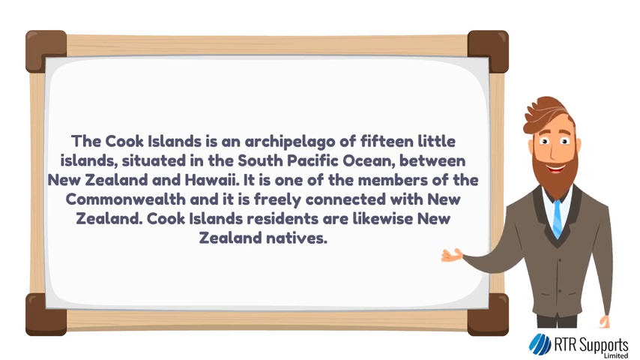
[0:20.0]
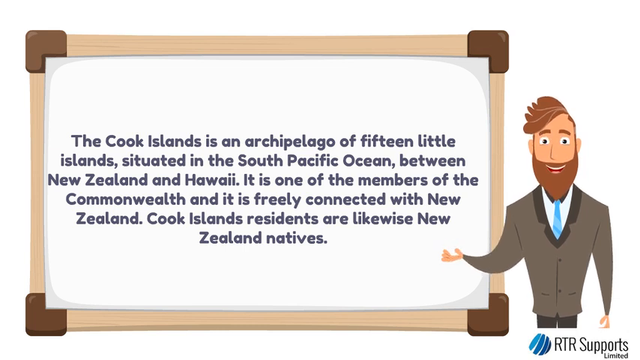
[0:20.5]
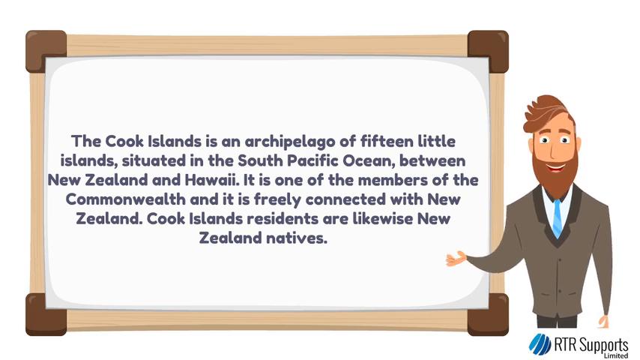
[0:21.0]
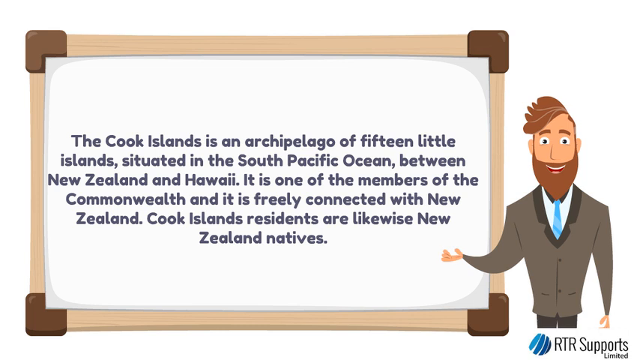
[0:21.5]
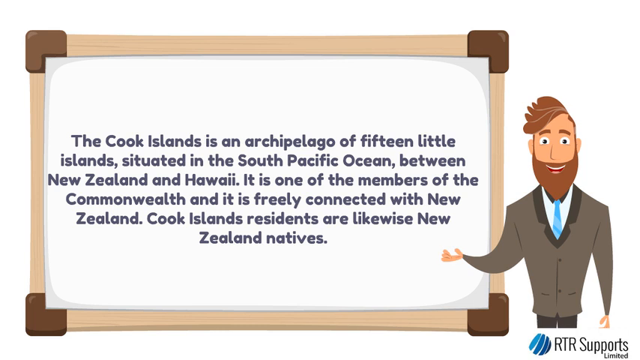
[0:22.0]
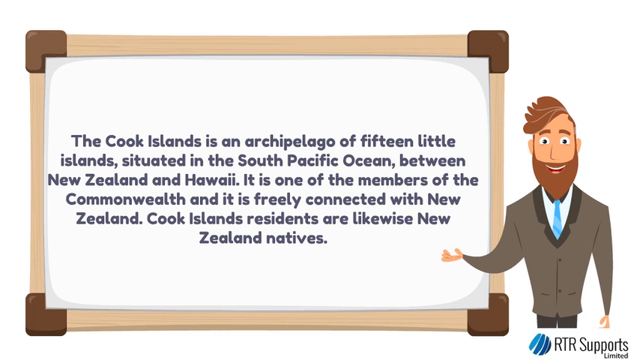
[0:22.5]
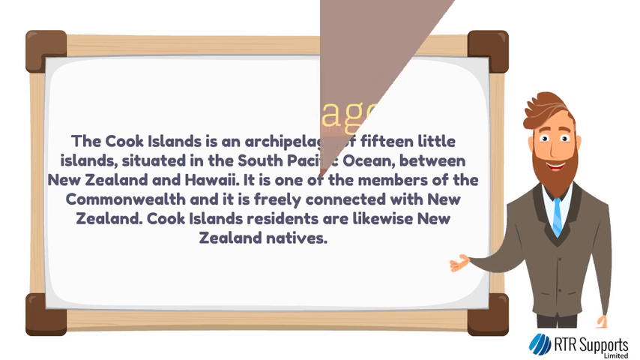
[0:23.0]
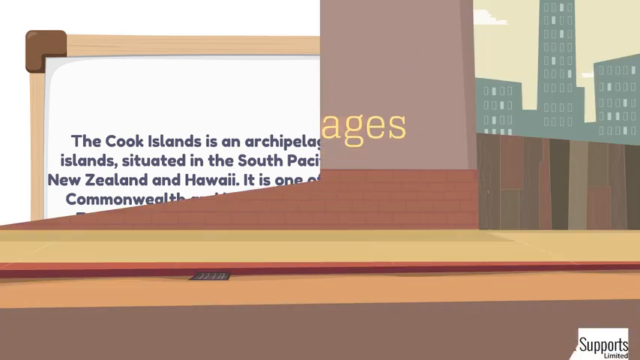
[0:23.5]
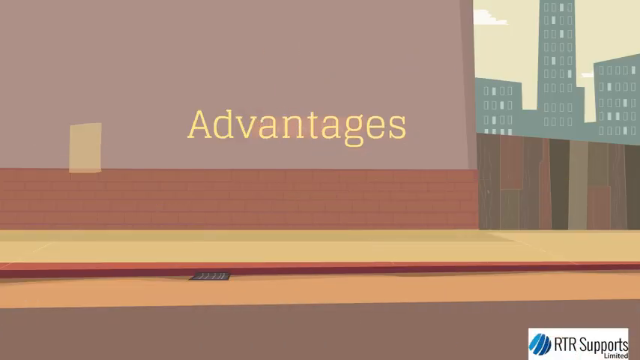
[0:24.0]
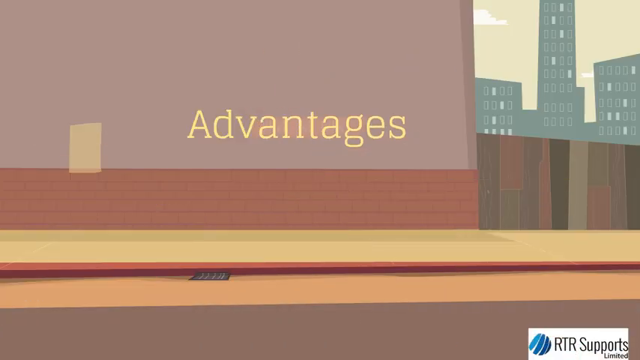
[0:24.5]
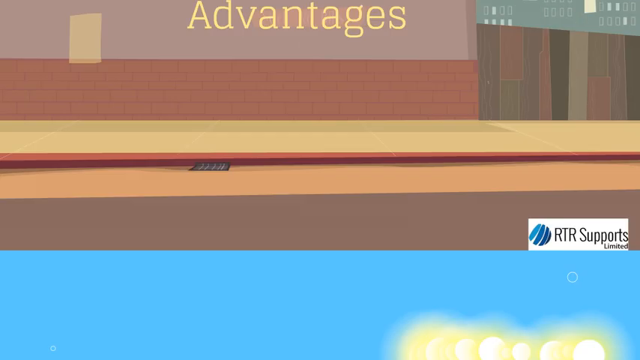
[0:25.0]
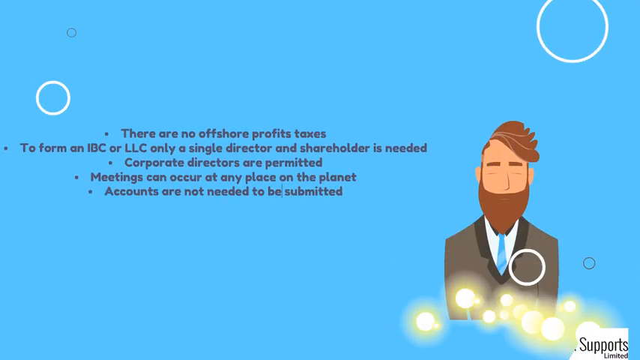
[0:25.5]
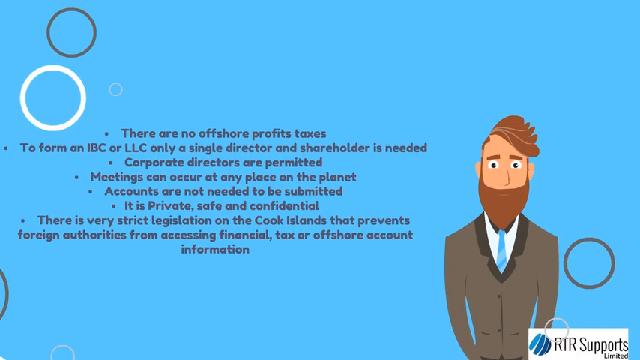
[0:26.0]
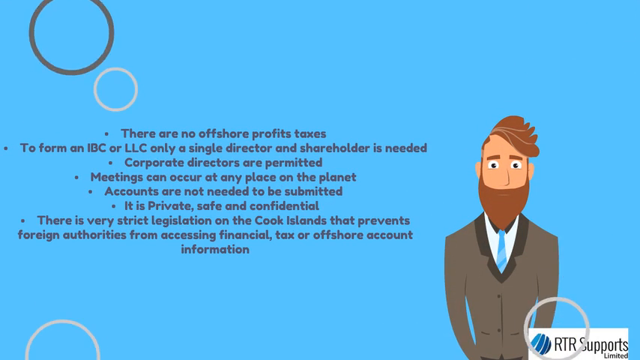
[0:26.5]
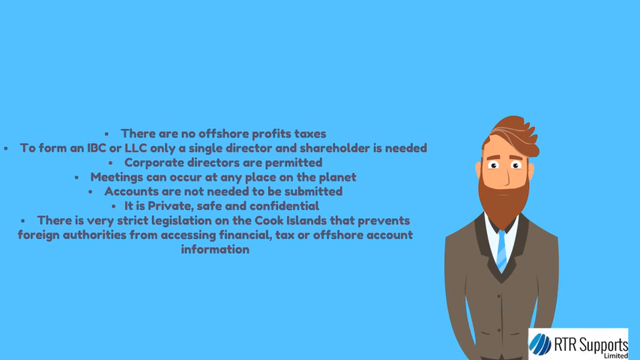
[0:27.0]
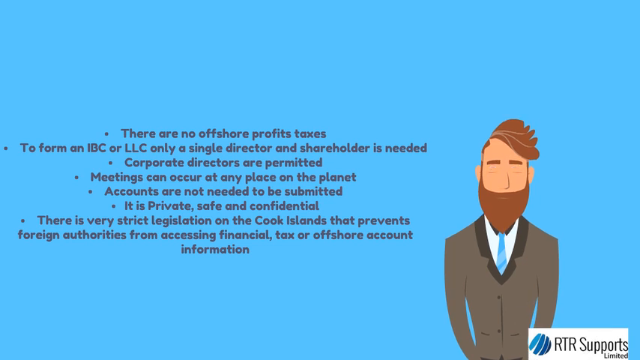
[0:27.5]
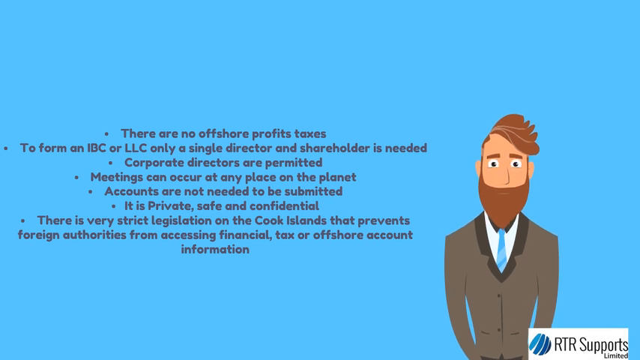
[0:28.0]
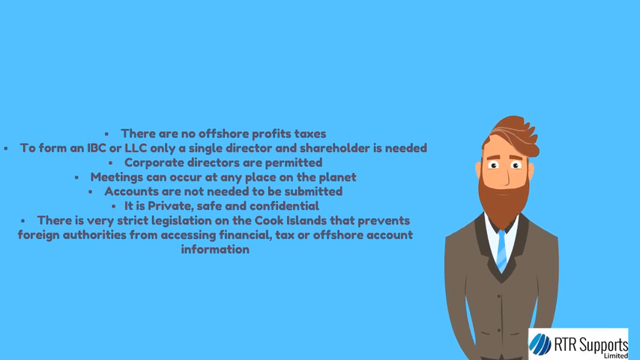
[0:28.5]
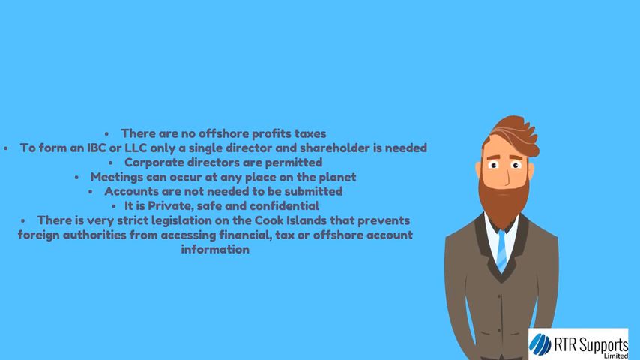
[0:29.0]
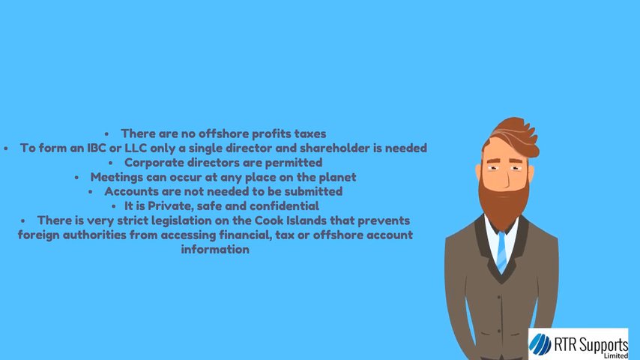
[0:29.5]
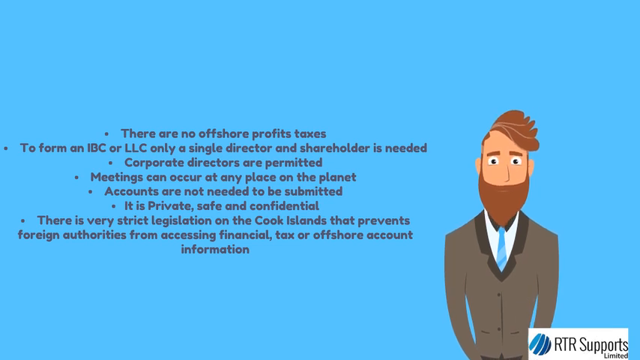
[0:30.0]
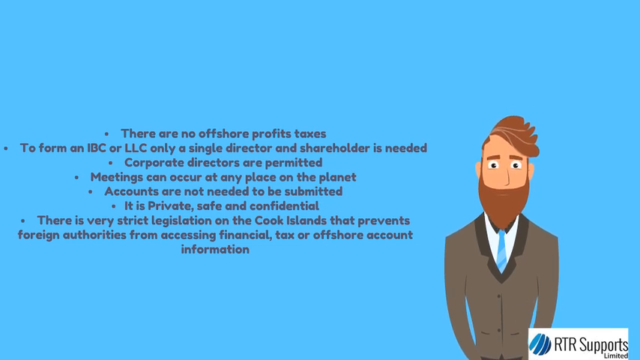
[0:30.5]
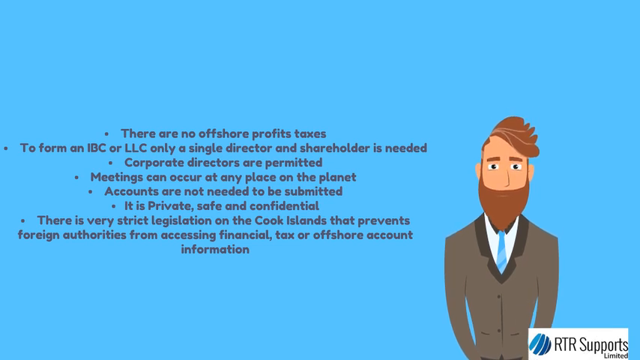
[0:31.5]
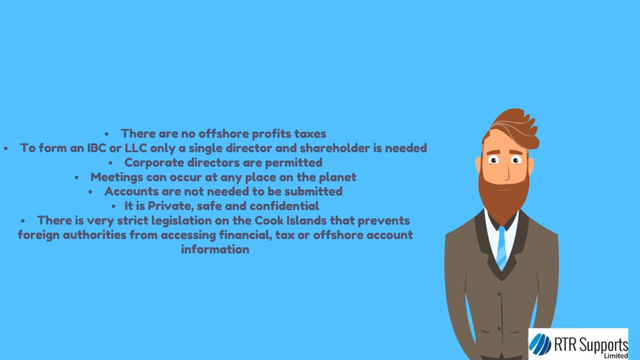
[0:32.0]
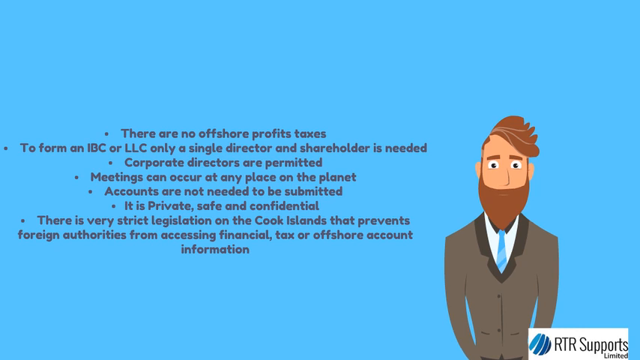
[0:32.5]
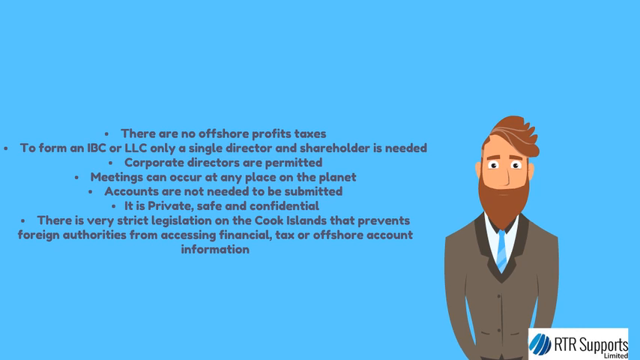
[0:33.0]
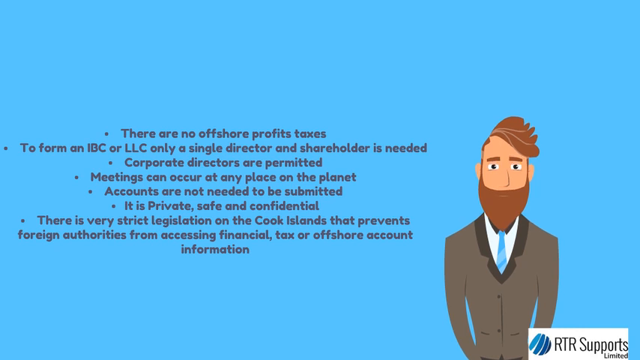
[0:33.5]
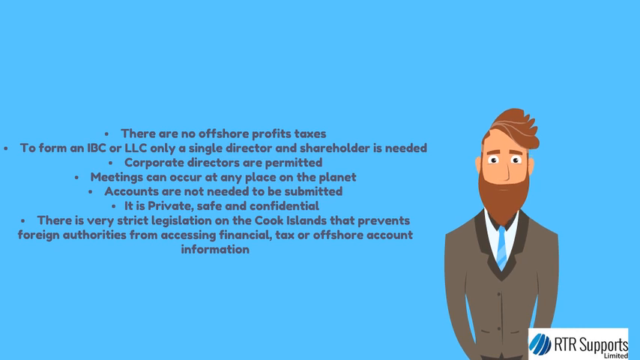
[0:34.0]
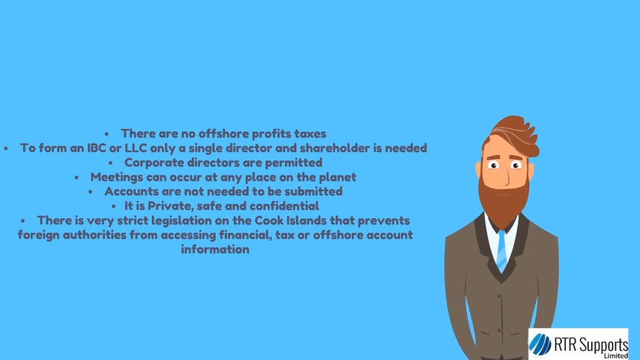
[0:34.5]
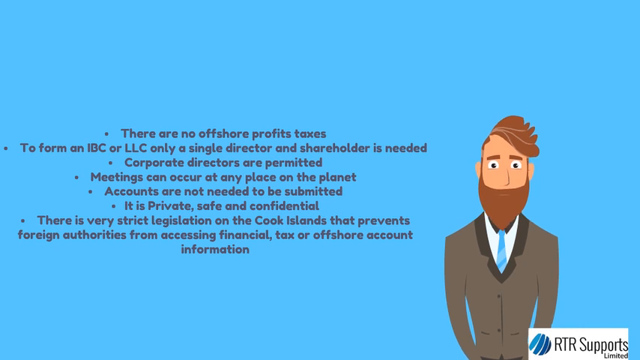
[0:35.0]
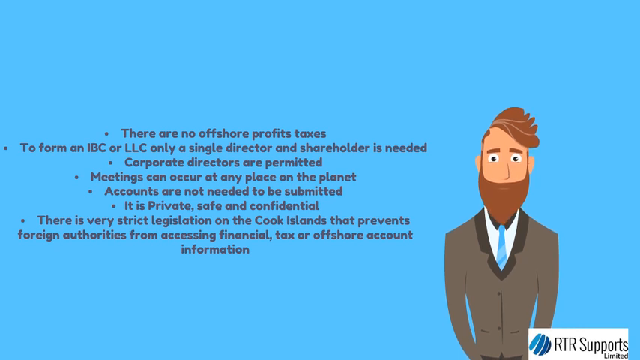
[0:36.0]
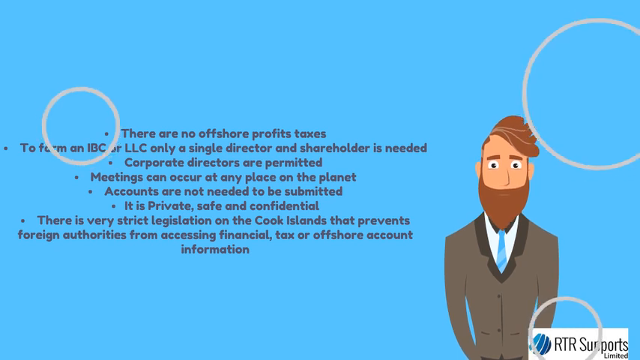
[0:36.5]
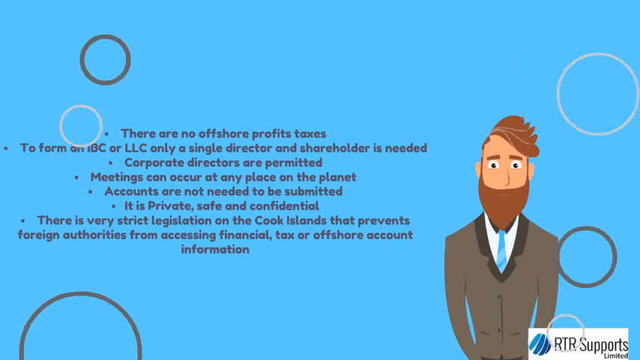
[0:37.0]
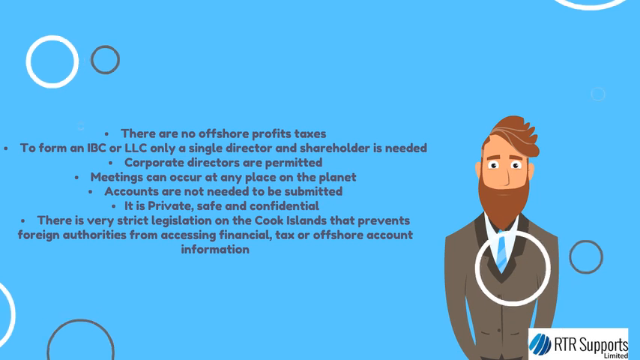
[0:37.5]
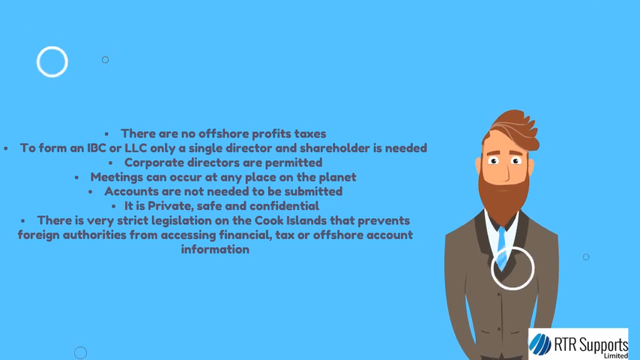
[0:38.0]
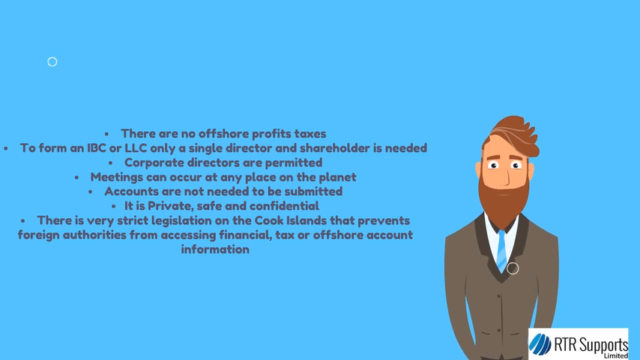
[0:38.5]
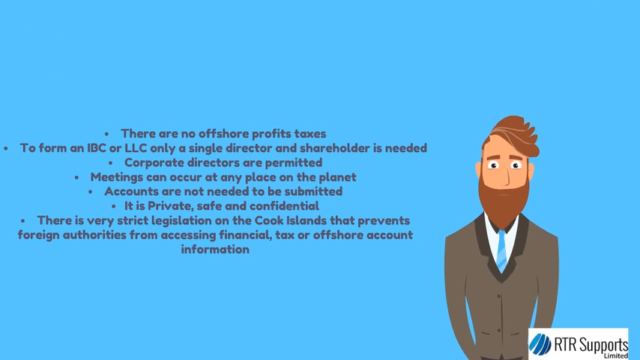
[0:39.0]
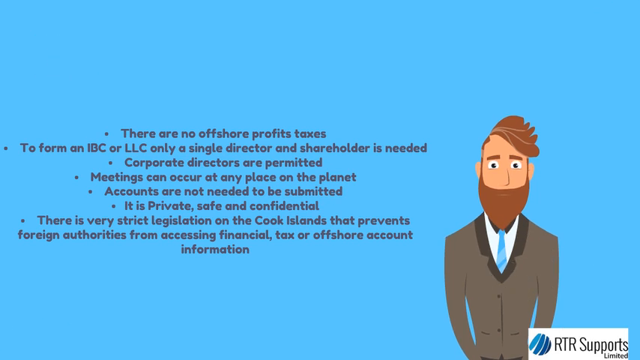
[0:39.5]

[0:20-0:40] The presentation explains what the Cook Islands are: an archipelago of 15 little islands in the South Pacific Ocean between New Zealand and Hawaii, a member of the Commonwealth, really connected with New Zealand, with residents who are likewise New Zealand natives. Chris Penn then shows a list of advantages: corporate directors are permitted, meetings can occur at any place, it is private, safe and confidential, and very strict legislation on the Cook Islands prevents authorities from accessing financial or offshore account information.